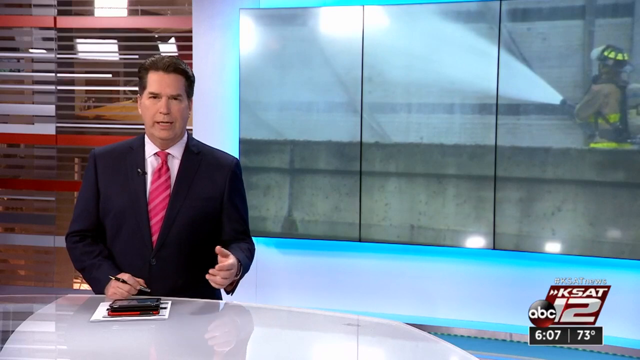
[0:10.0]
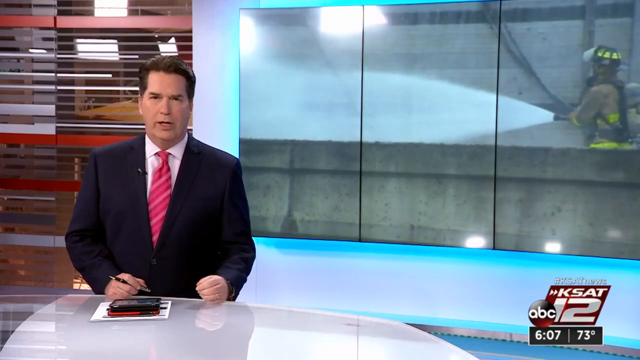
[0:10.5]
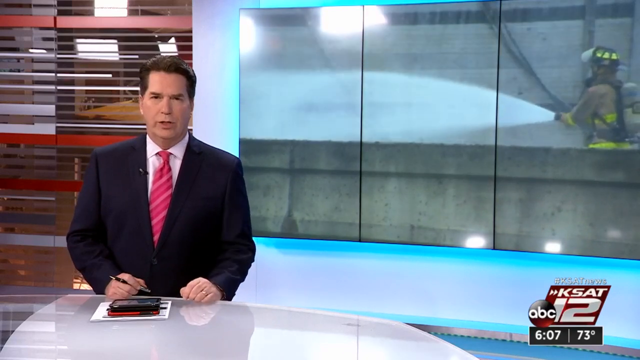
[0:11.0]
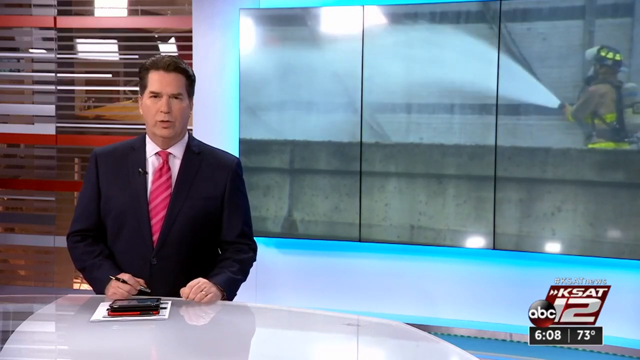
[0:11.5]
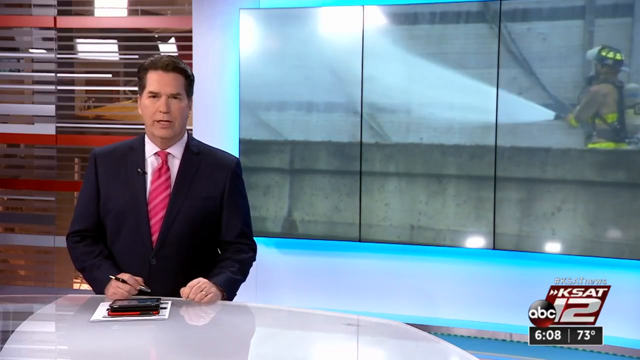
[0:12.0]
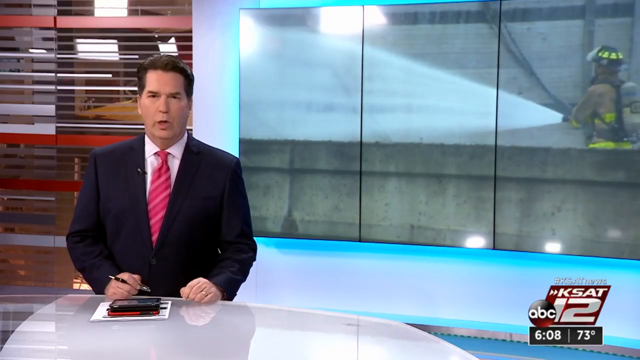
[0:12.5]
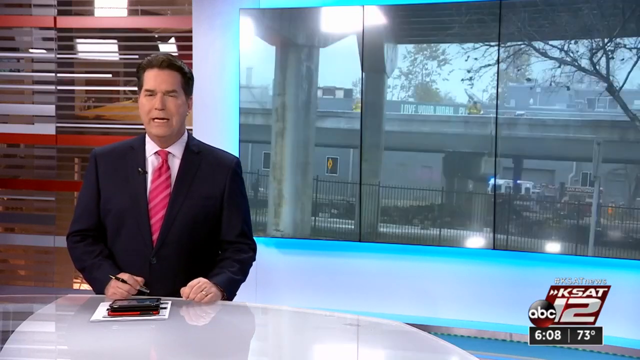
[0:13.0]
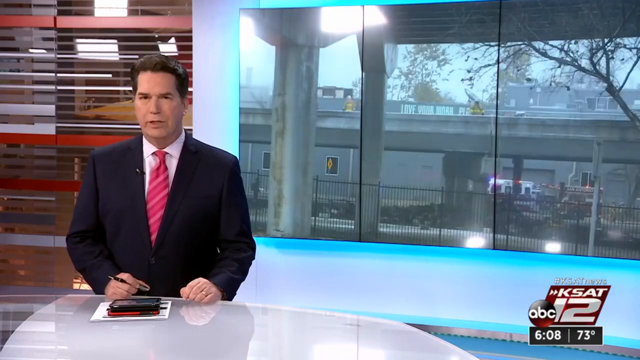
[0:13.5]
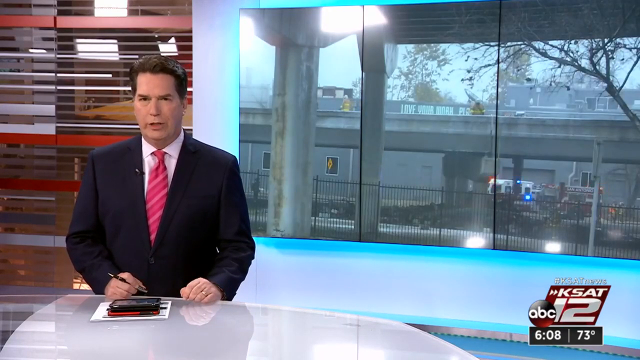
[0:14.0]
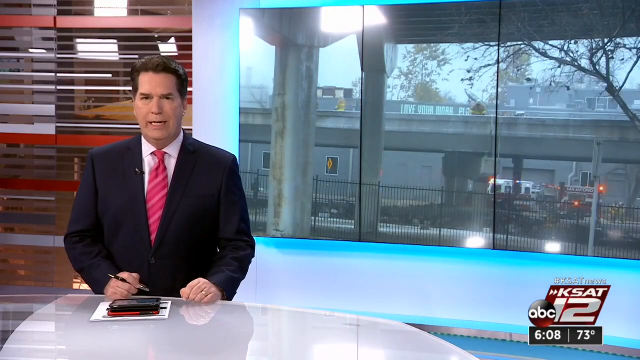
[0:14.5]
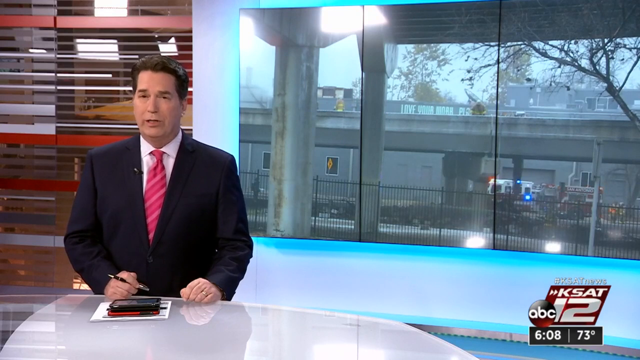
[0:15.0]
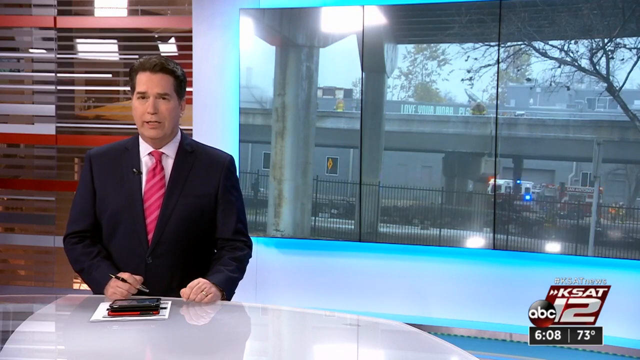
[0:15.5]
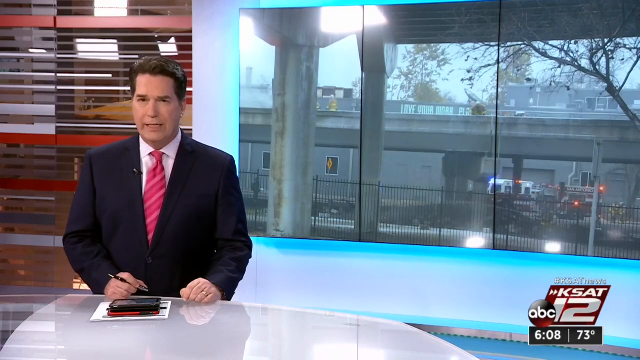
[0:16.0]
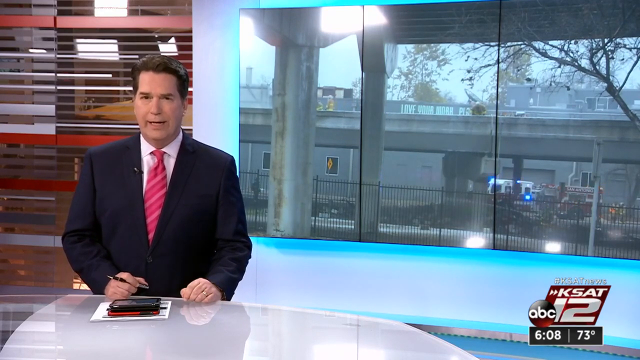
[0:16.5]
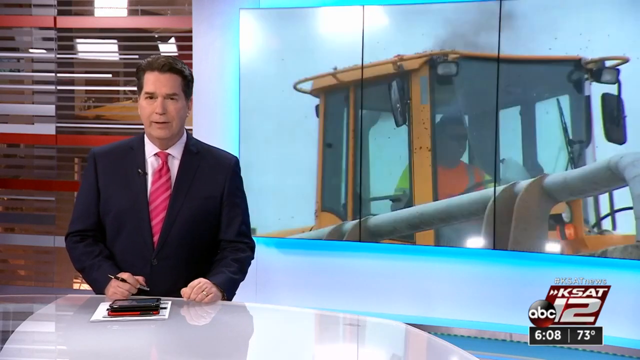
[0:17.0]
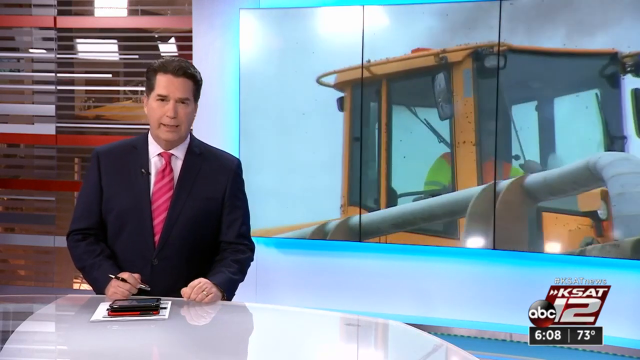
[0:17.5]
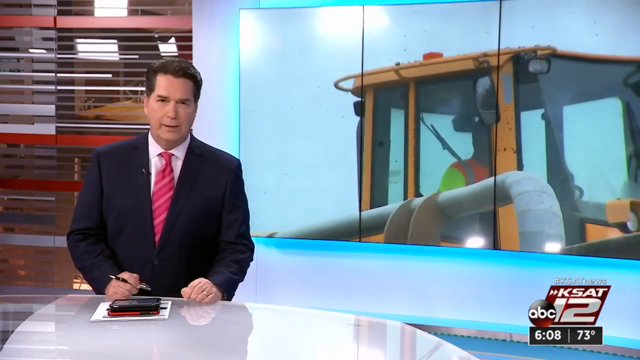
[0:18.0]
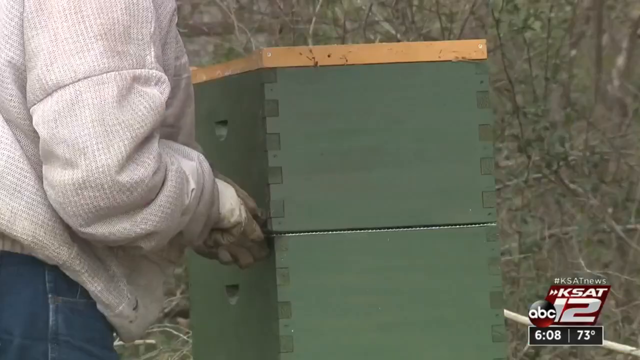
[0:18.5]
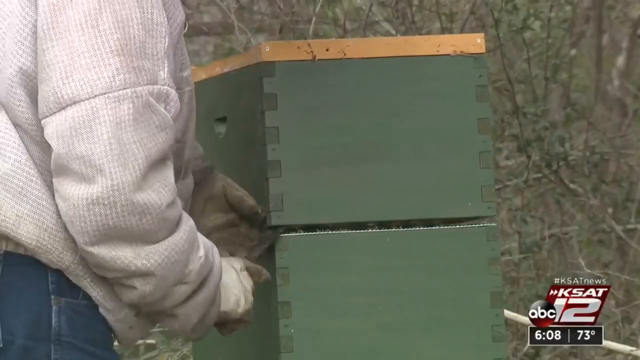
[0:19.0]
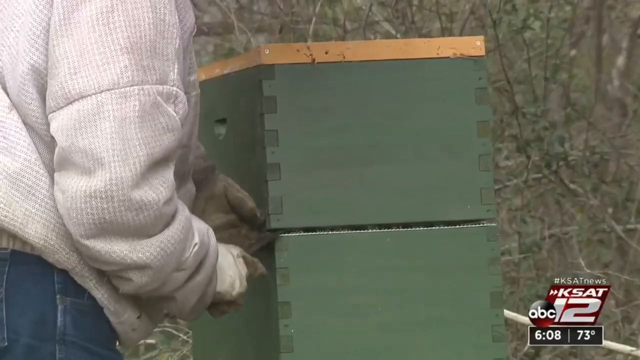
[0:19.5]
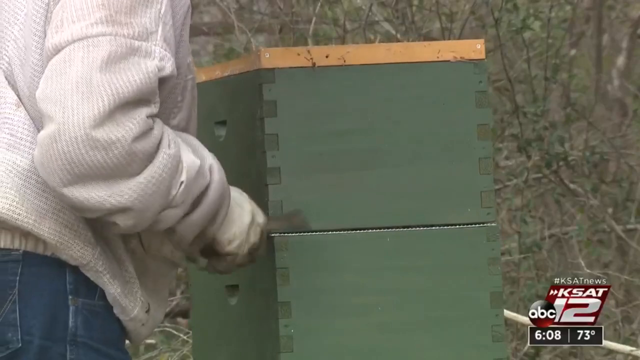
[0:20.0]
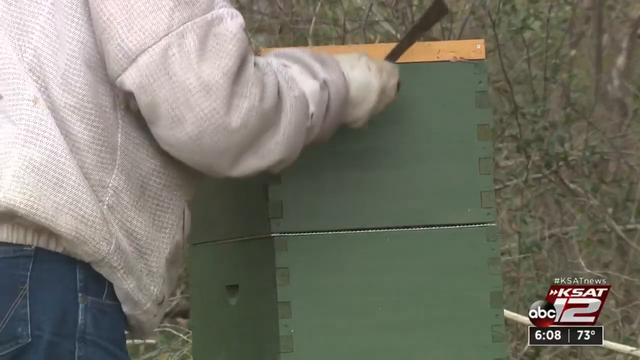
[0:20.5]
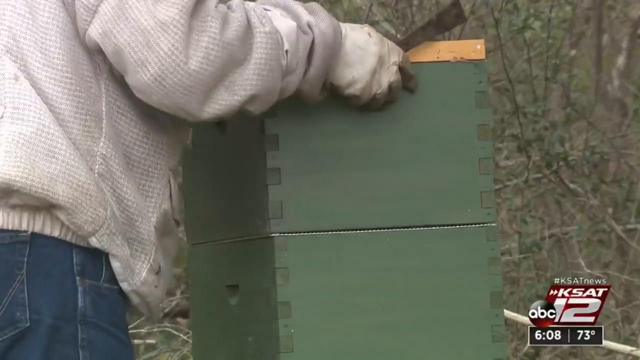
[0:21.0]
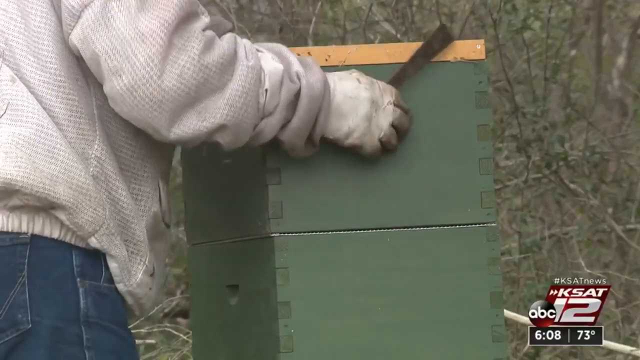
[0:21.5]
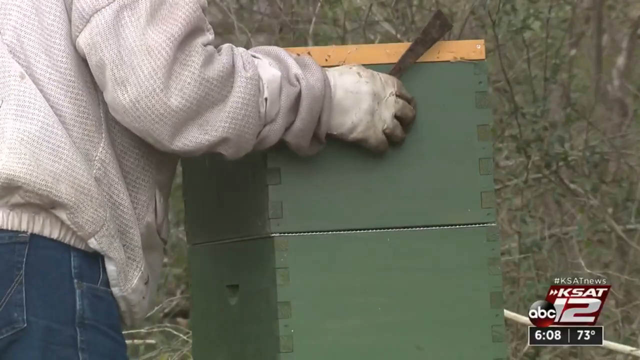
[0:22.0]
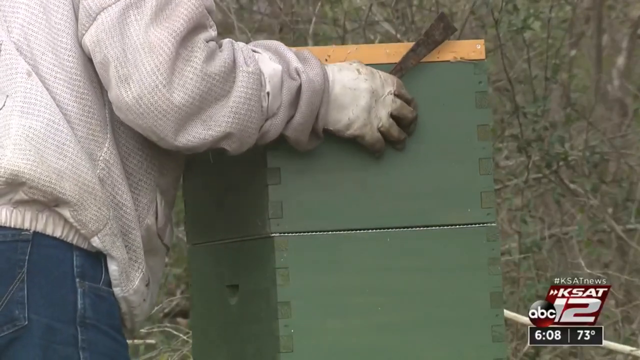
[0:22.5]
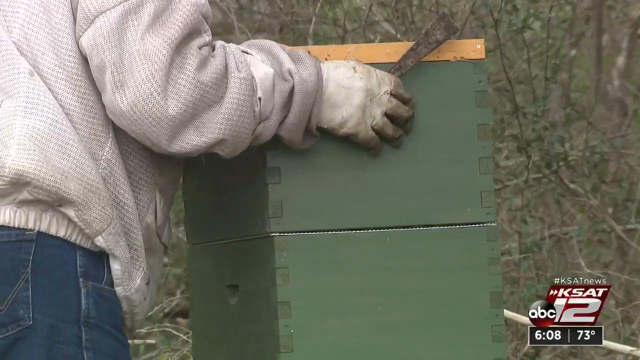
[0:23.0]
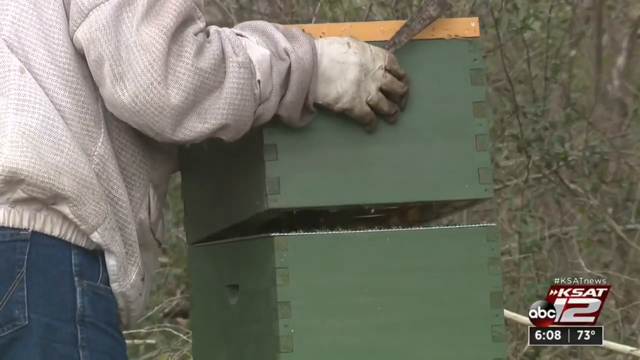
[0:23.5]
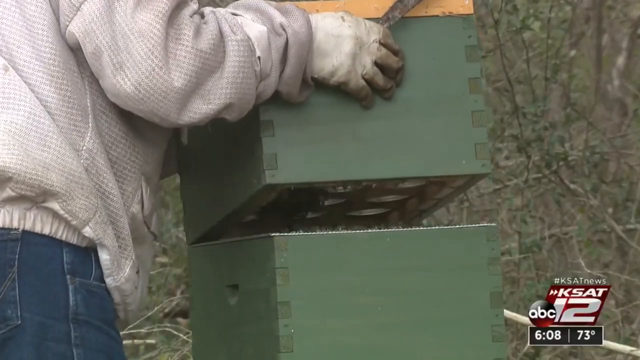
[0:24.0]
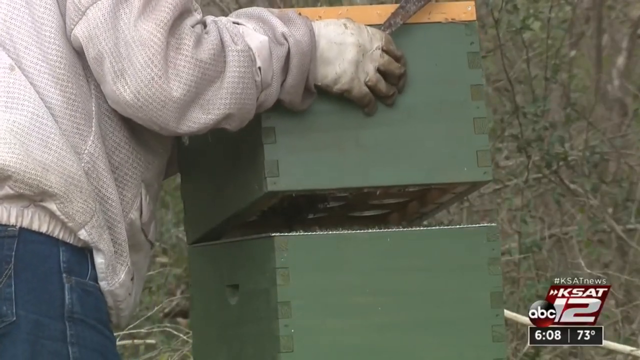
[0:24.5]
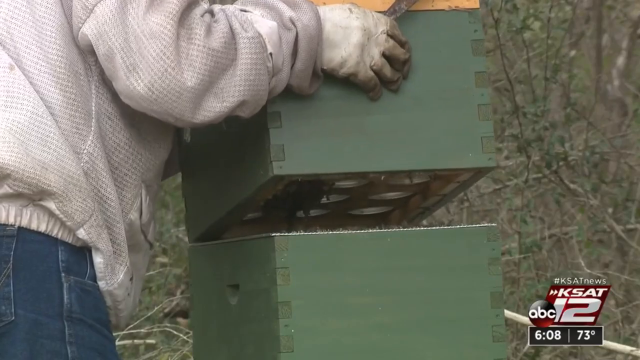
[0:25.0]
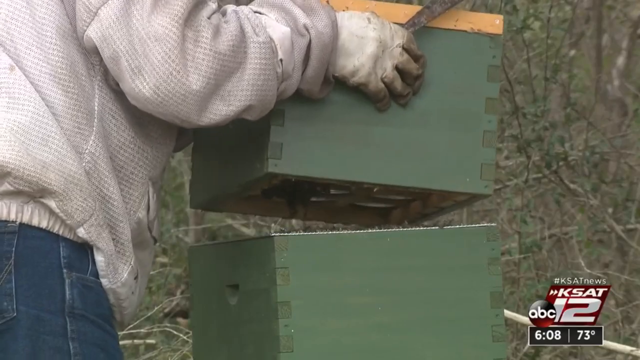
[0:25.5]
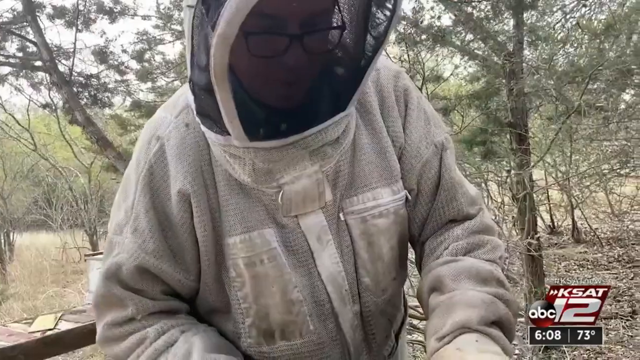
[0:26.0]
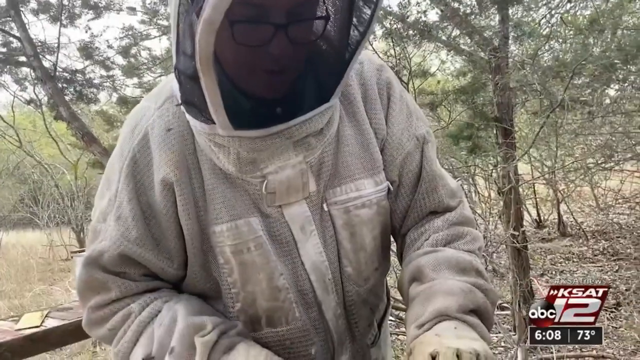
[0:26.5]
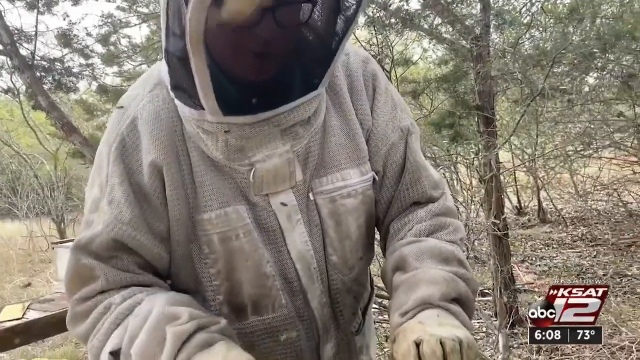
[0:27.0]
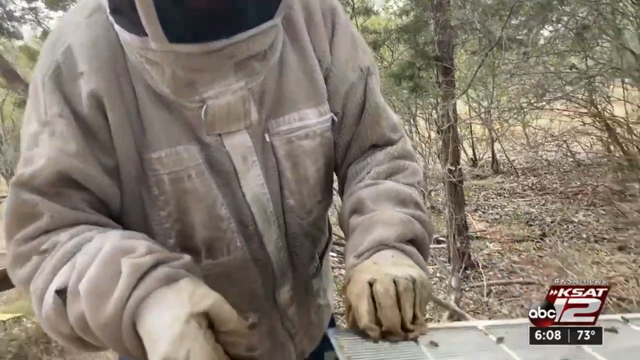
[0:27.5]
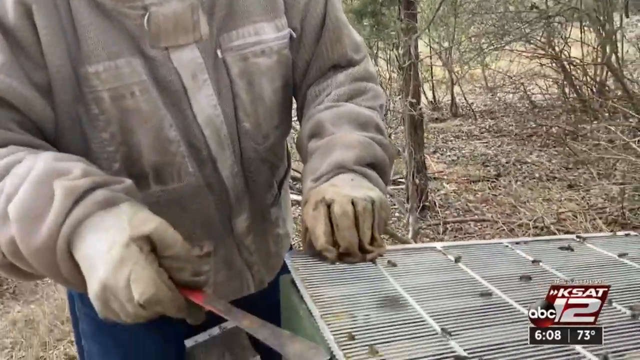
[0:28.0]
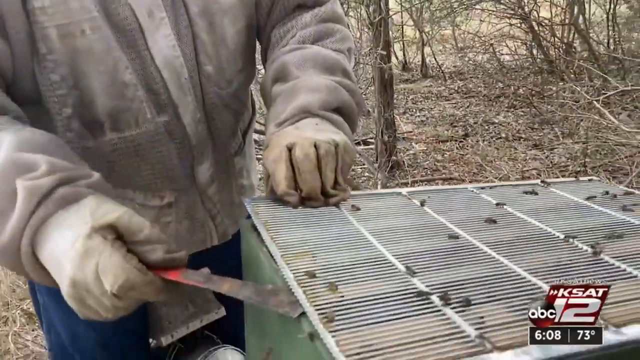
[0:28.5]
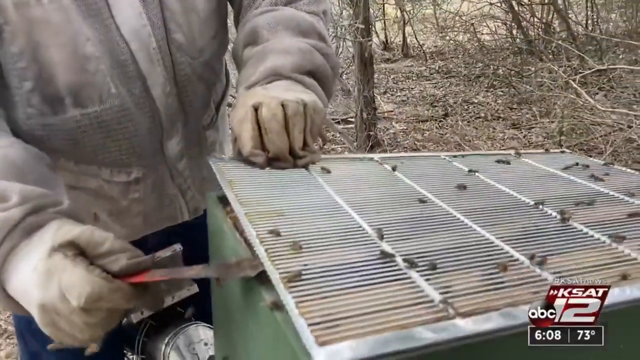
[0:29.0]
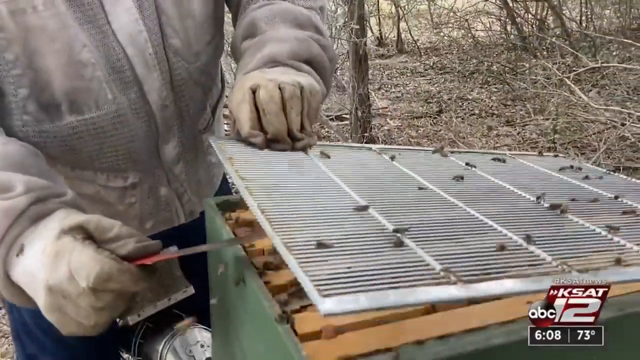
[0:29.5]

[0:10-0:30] In a news broadcast, a man stands on the left, talking and gesturing with his hands while holding a pen. He is in a black shirt with a red tie. The big screen behind him shows a fireman holding a water hose, and "KSAT ABC 12" appears on the bottom right. The screen then switches to a scene of some cars under a freeway, with some firemen working on top of it. Next it shows a man driving a tractor, wearing a red and yellow uniform. It then switches to two hands opening a box in the middle with a tool. He lifts up the top half and puts it upside down, and bees fly out when he opens the screen on top. He is wearing an outfit and a mask, with protective gloves.